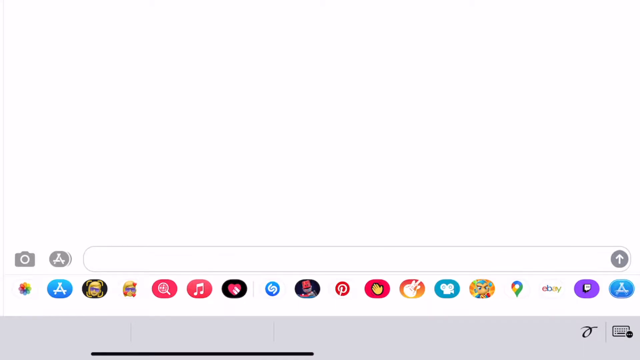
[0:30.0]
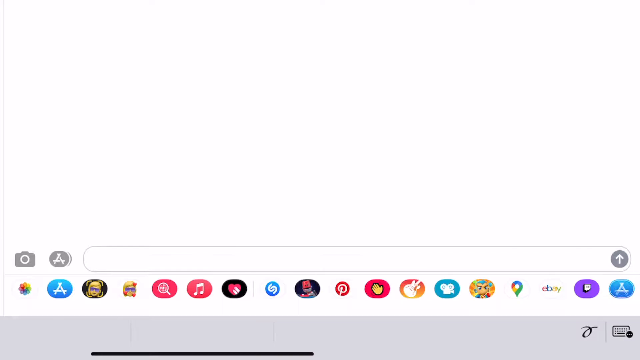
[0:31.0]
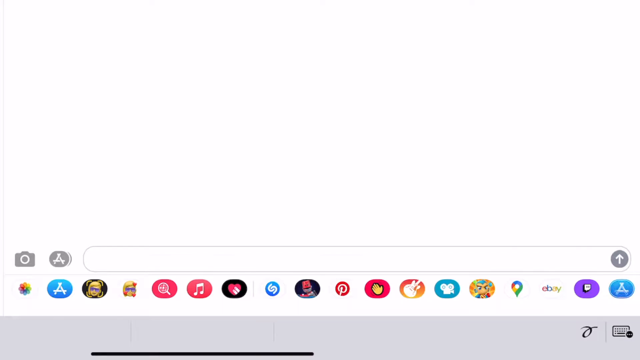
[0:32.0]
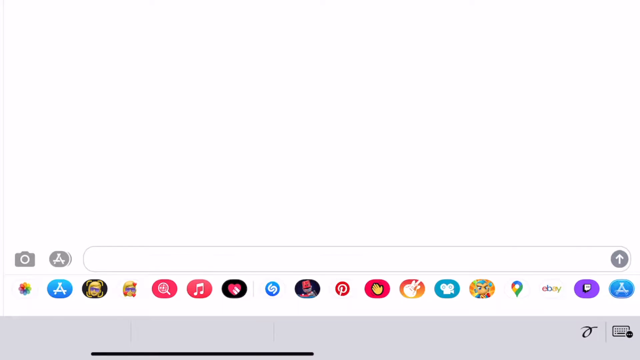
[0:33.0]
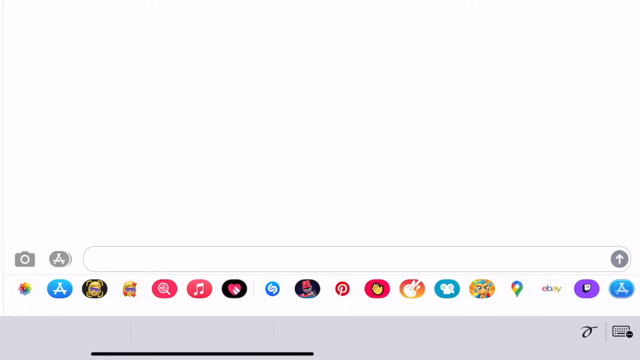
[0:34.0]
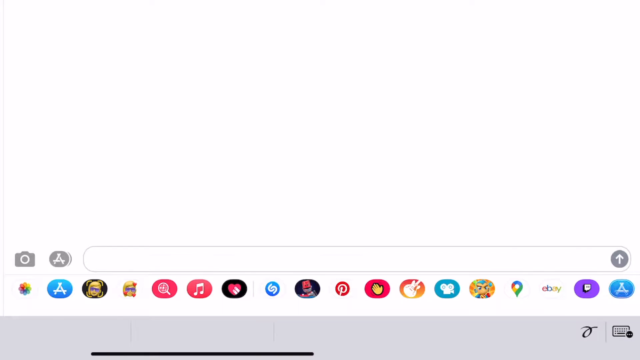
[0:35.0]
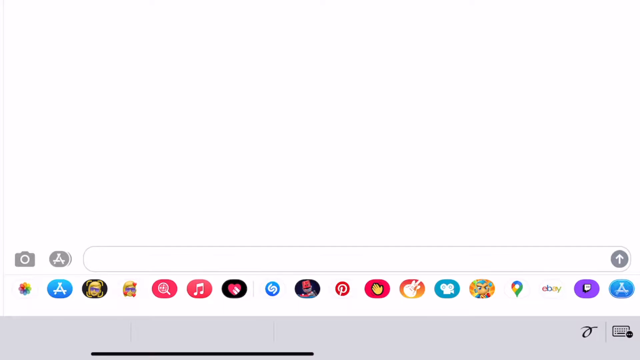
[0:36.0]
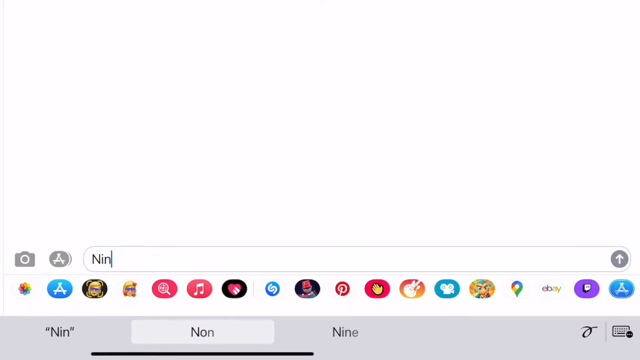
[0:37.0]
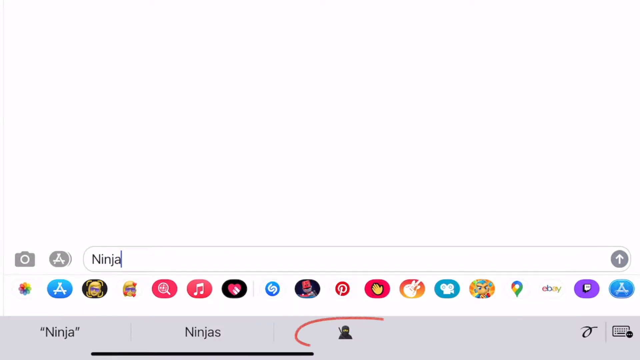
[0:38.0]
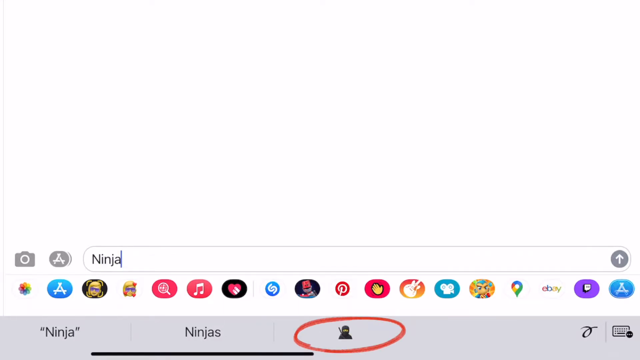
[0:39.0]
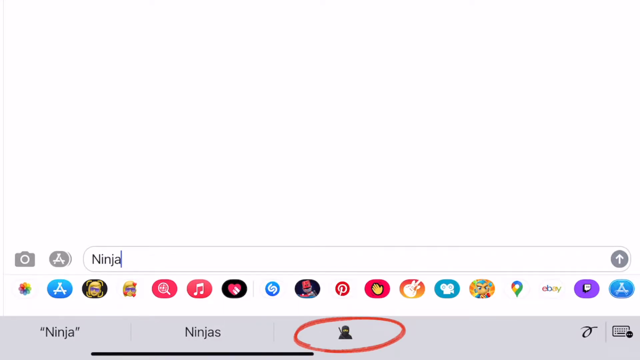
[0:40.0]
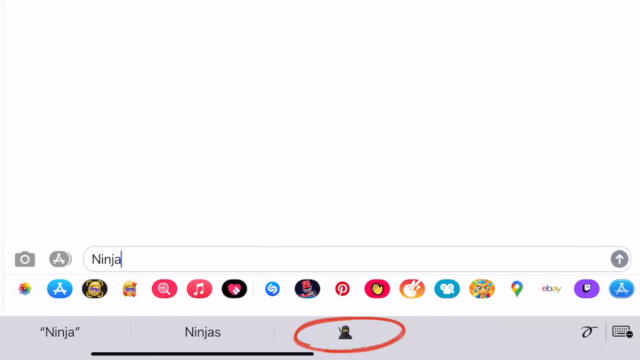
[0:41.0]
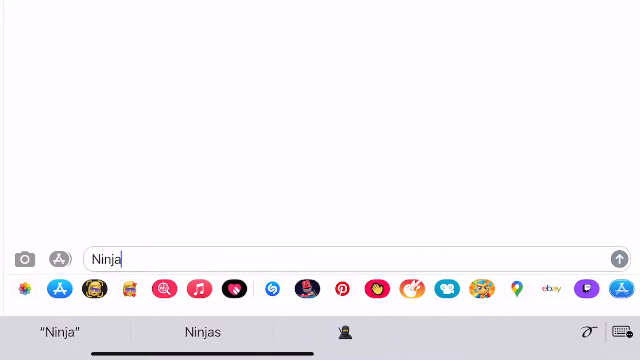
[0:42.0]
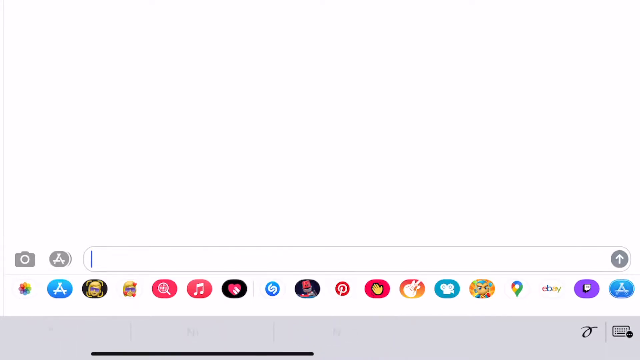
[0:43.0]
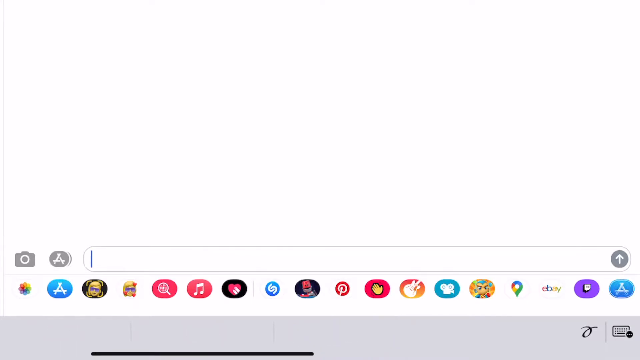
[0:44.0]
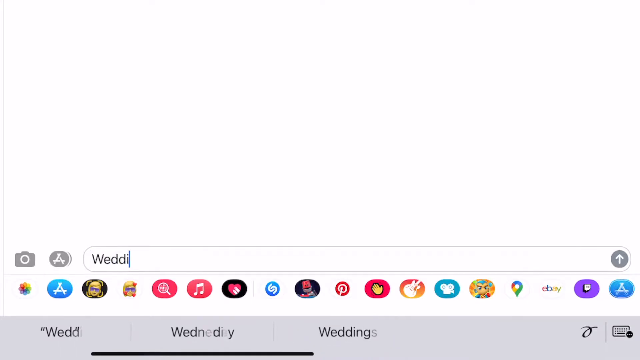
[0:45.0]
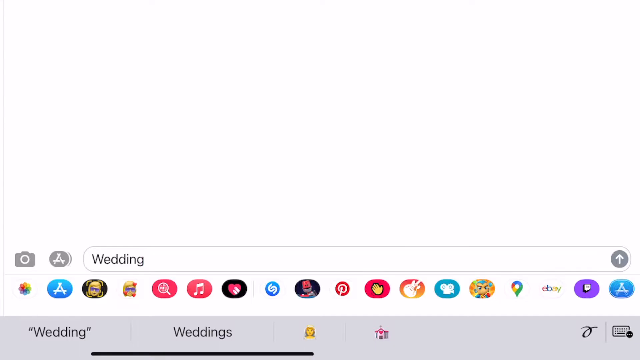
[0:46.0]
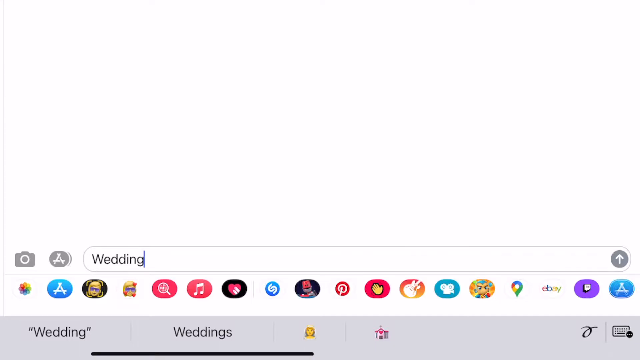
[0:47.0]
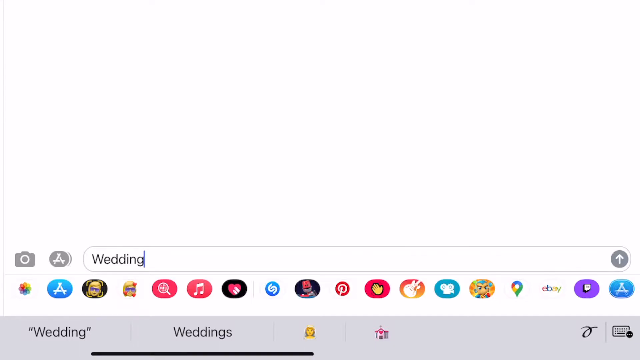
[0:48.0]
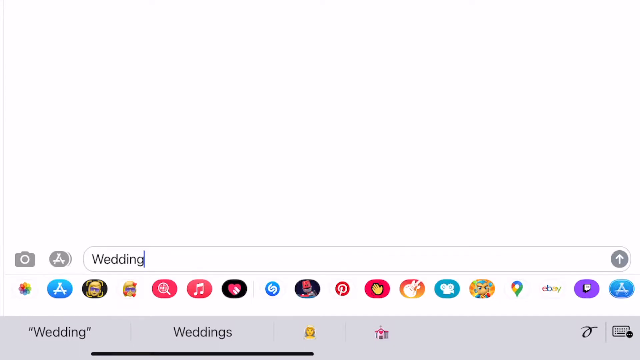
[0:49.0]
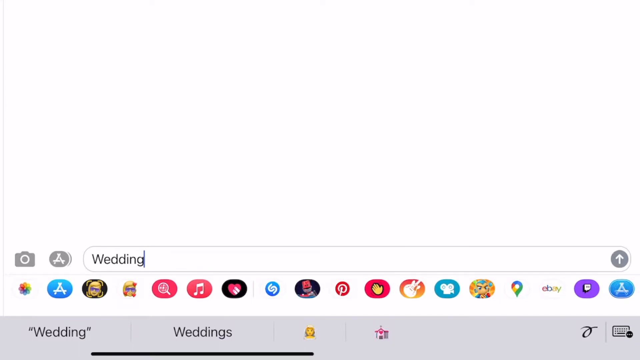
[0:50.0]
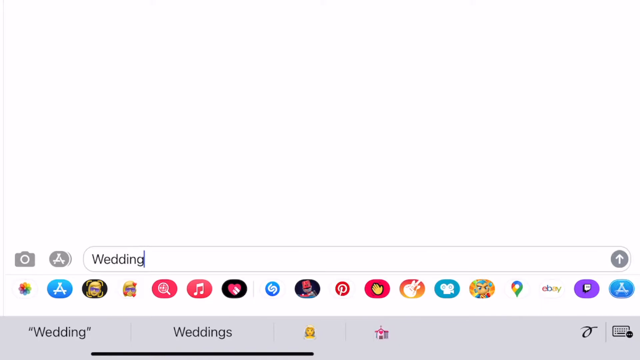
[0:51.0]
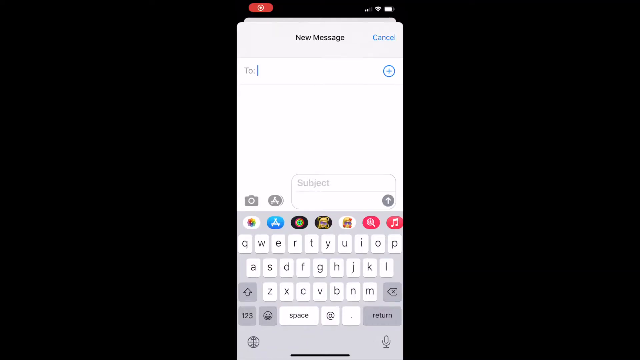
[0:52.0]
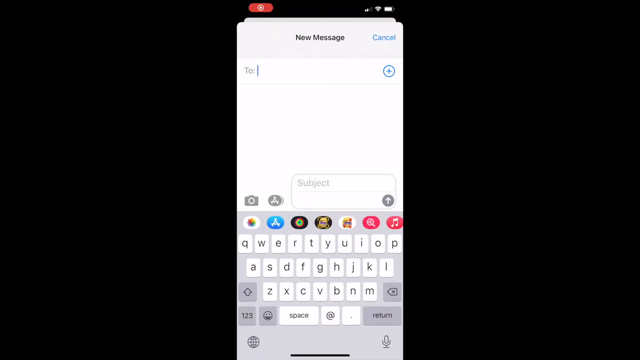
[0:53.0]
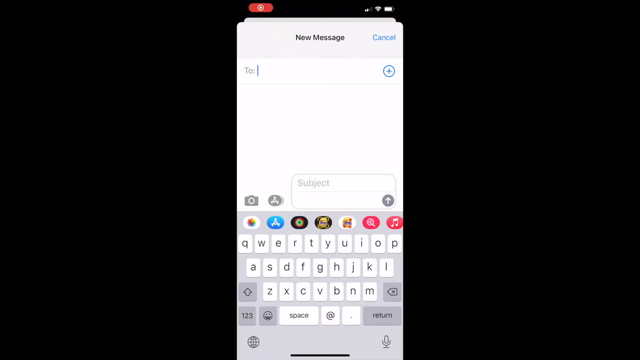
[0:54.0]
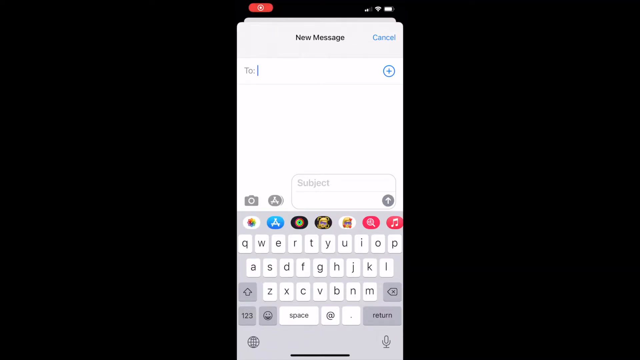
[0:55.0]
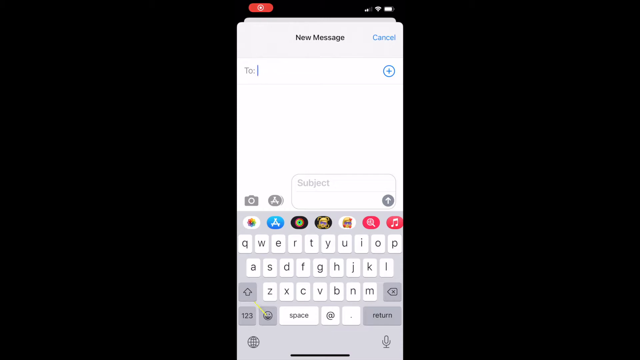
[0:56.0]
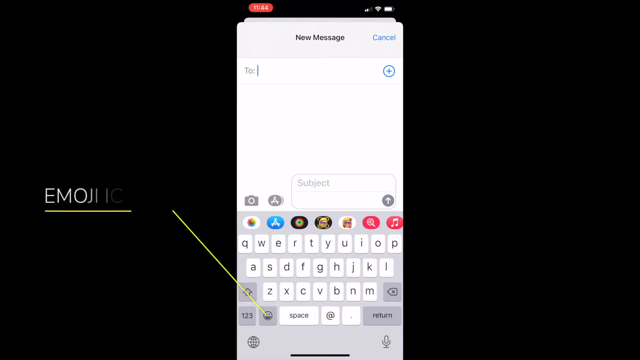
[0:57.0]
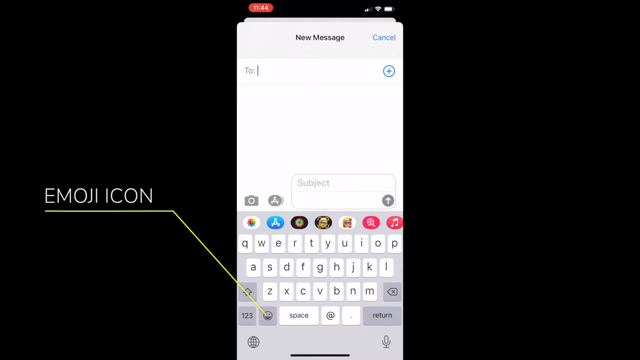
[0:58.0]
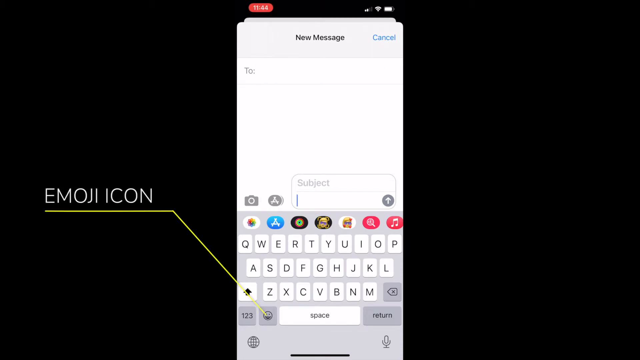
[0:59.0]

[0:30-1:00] The same white screen with the little icons at the bottom is shown. The word "ninja" is typed into the search bar at the bottom, then erased, and the word "wedding" is typed in. The screen then switches to mostly black, with what looks like a new message screen in the middle. The cursor is on the "To" field, there is a blank area to write in, and the keyboard is at the bottom. The emoji icon is pointed out in the message screen; it is located at the bottom of the screen, next to the spacebar.